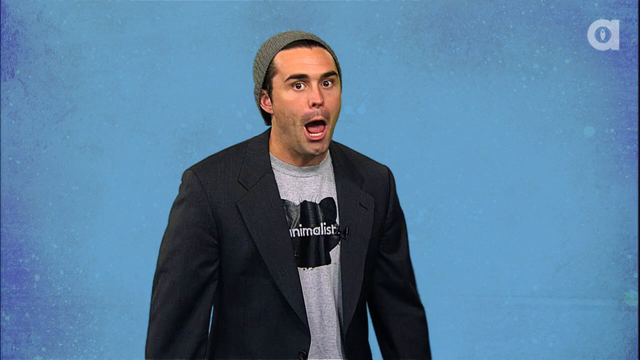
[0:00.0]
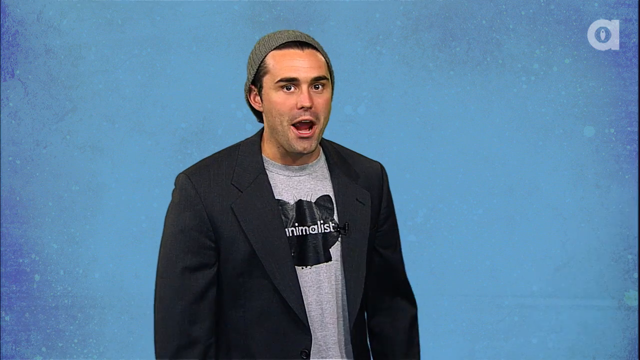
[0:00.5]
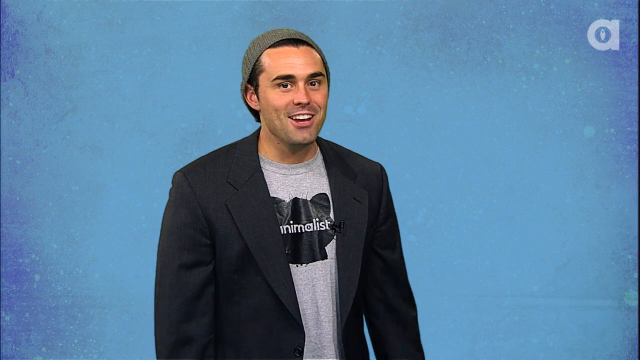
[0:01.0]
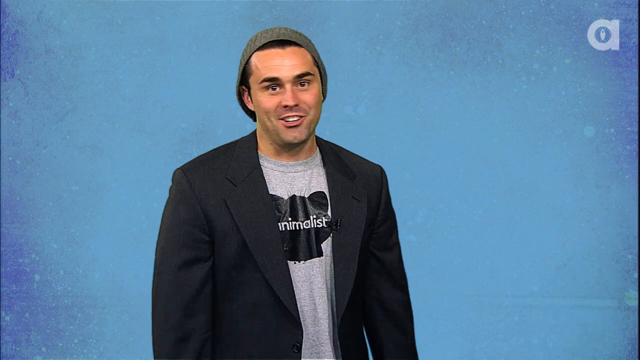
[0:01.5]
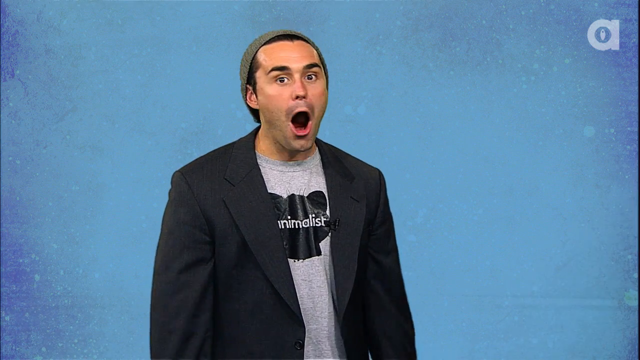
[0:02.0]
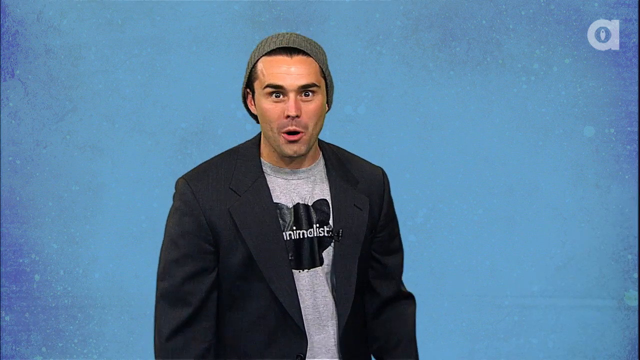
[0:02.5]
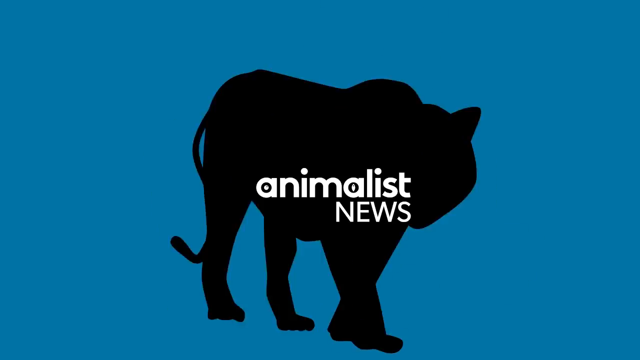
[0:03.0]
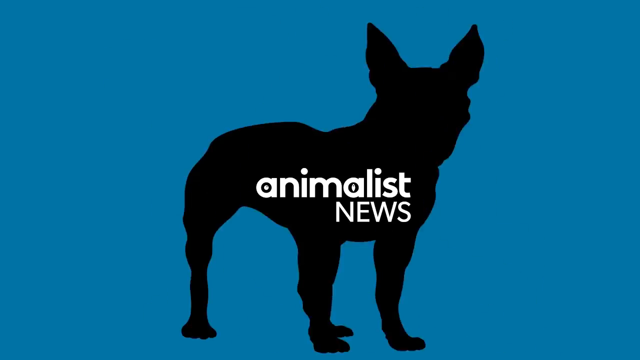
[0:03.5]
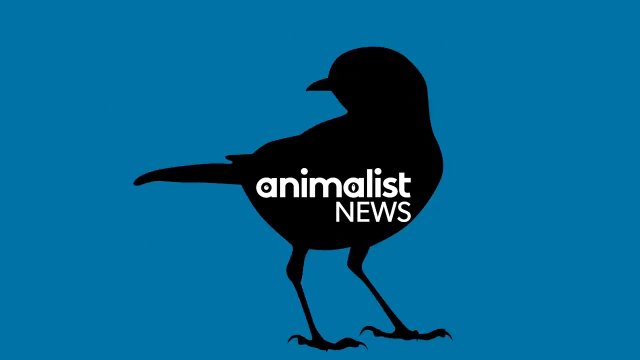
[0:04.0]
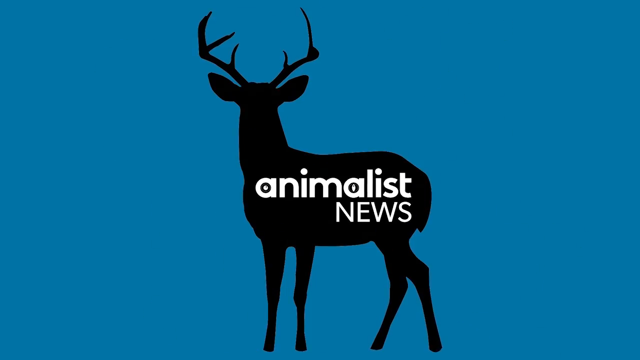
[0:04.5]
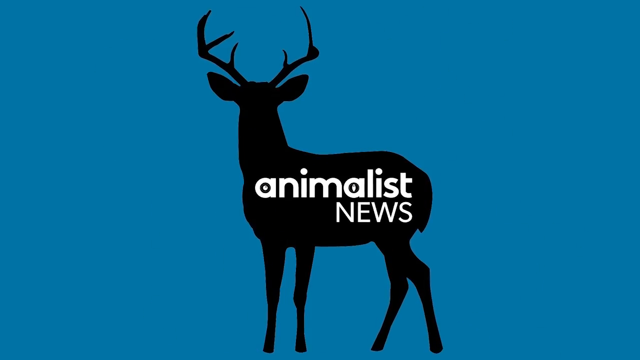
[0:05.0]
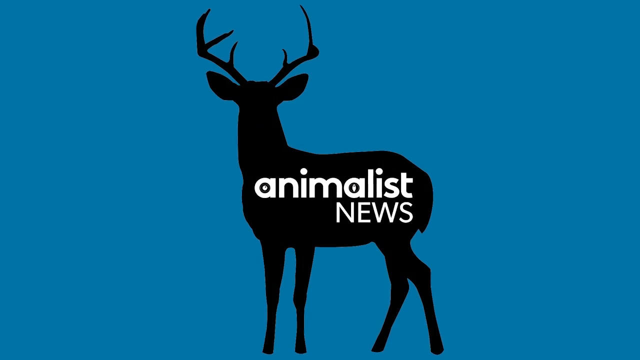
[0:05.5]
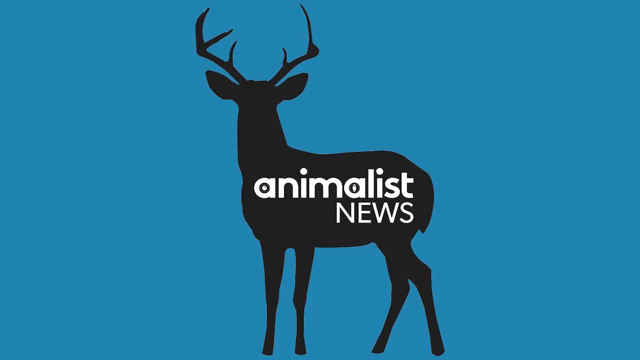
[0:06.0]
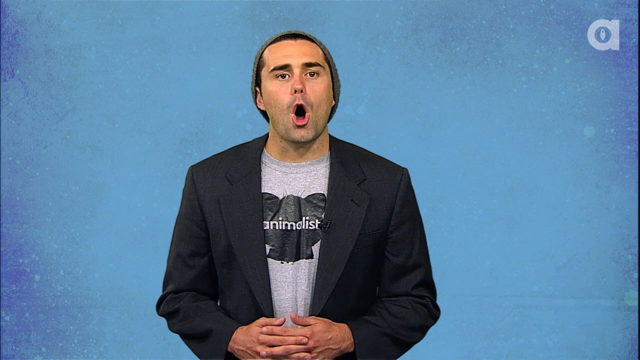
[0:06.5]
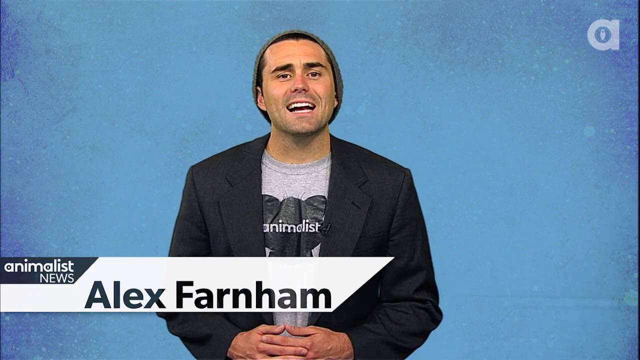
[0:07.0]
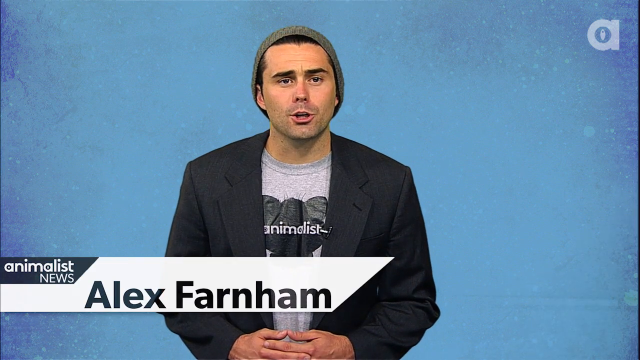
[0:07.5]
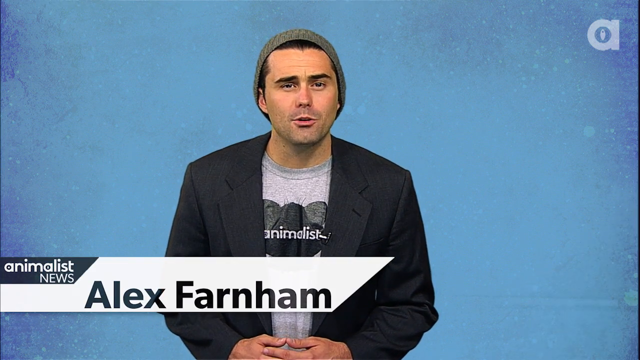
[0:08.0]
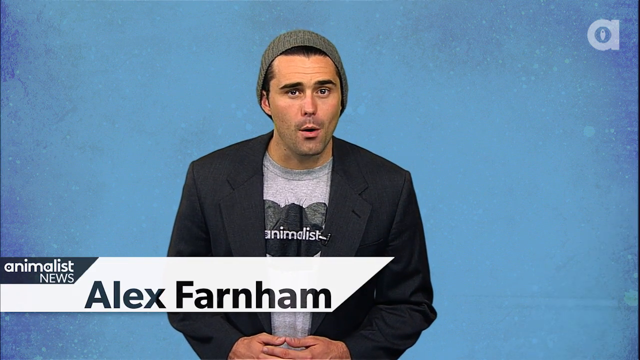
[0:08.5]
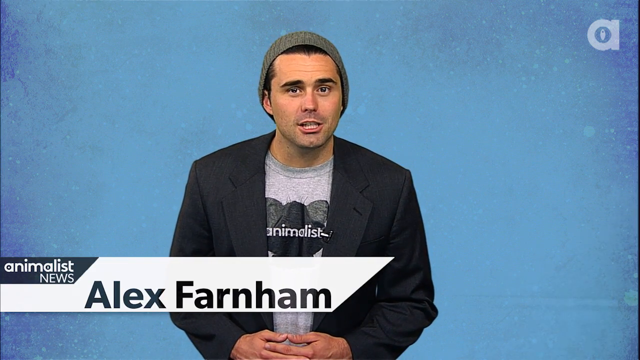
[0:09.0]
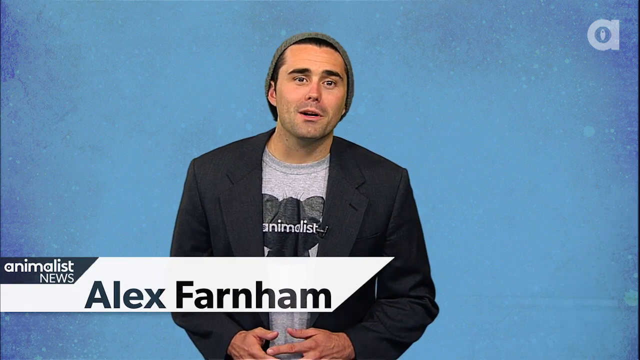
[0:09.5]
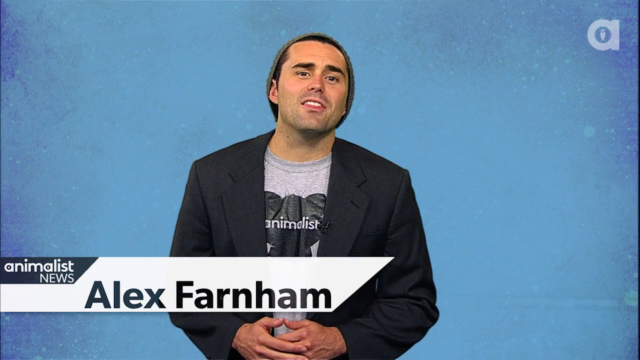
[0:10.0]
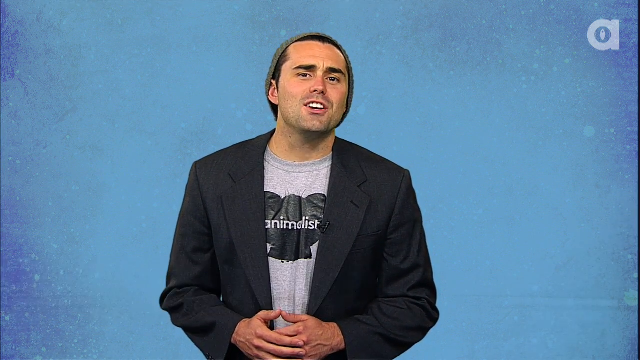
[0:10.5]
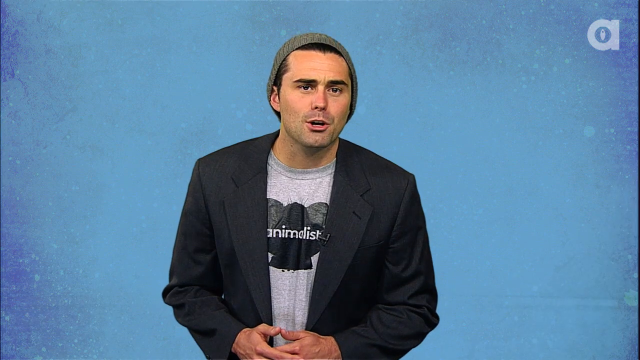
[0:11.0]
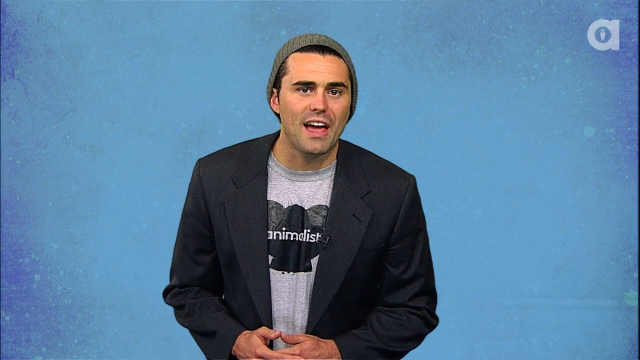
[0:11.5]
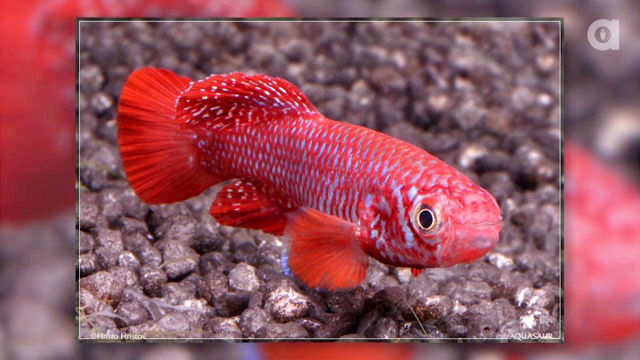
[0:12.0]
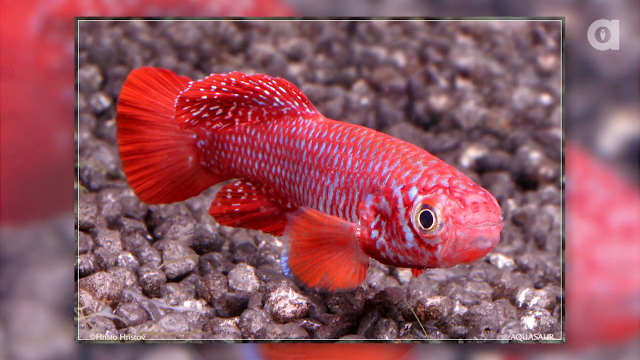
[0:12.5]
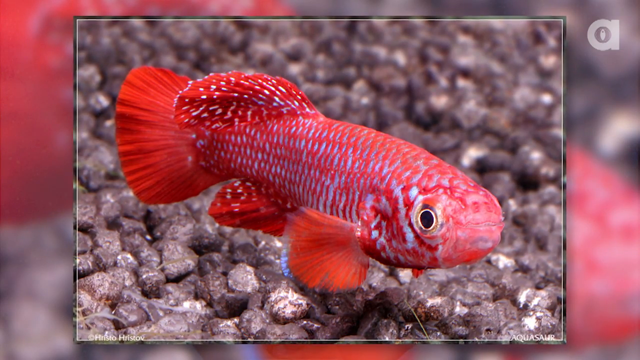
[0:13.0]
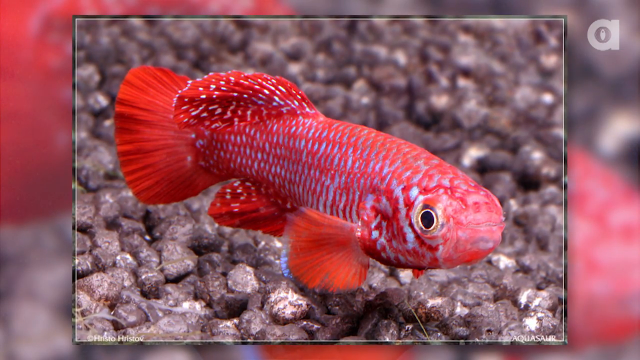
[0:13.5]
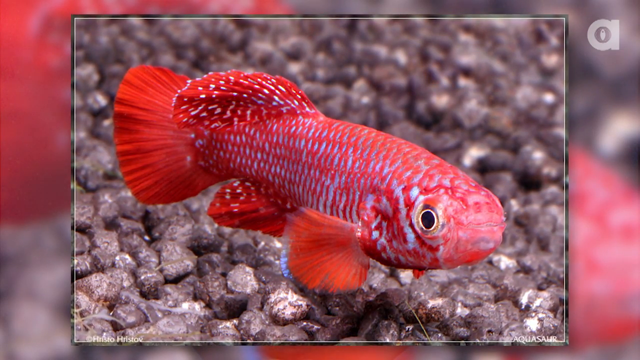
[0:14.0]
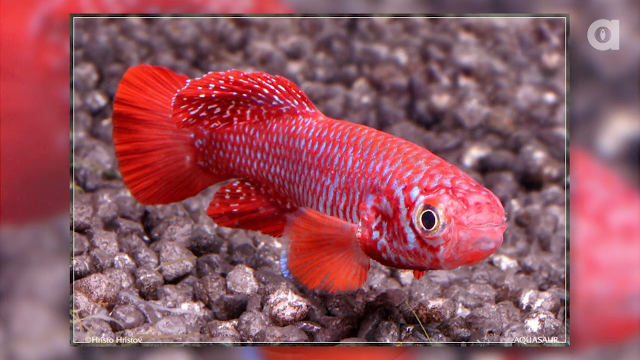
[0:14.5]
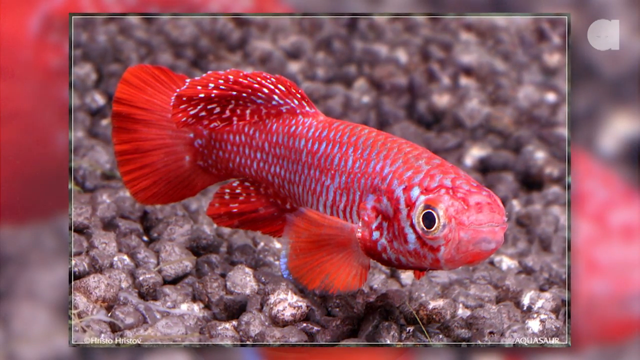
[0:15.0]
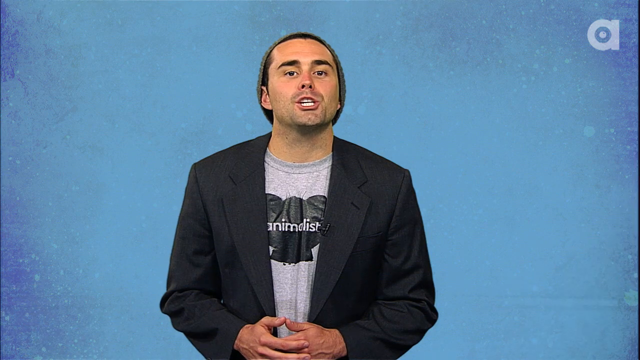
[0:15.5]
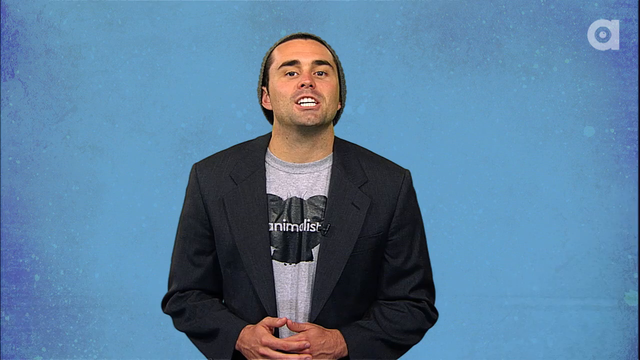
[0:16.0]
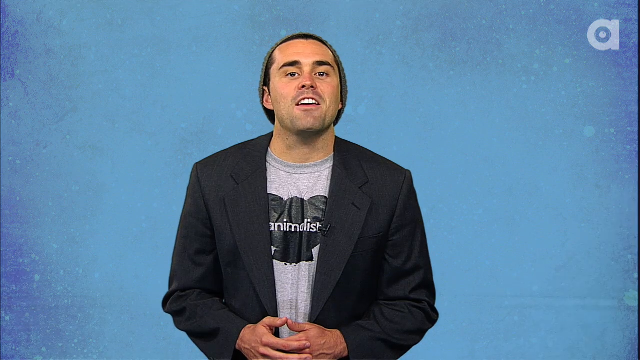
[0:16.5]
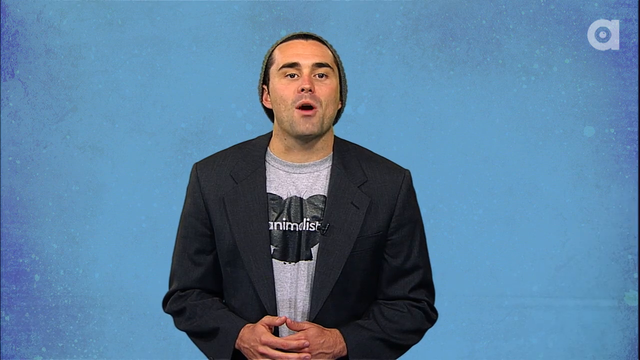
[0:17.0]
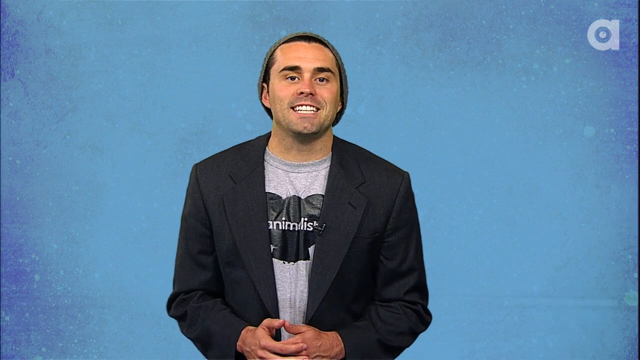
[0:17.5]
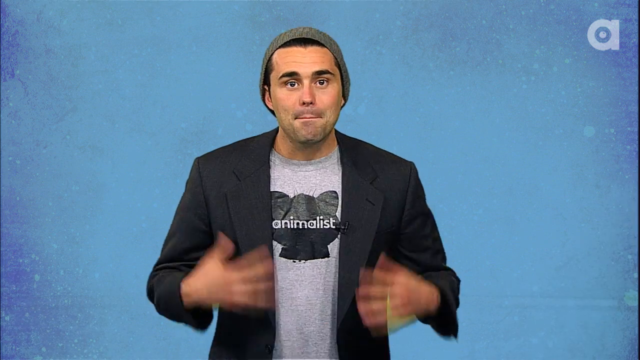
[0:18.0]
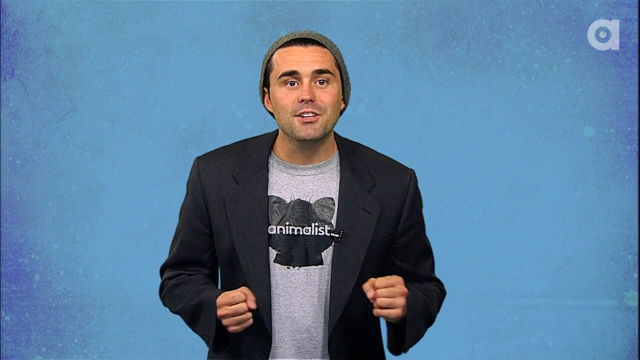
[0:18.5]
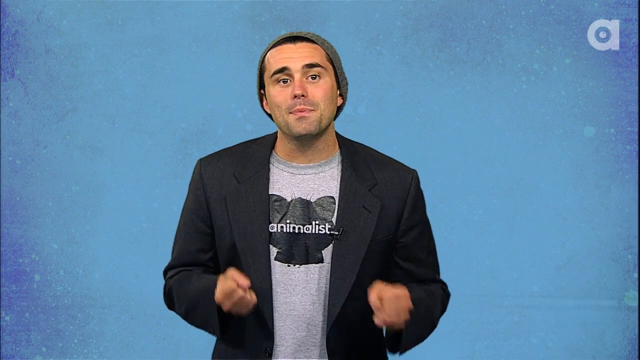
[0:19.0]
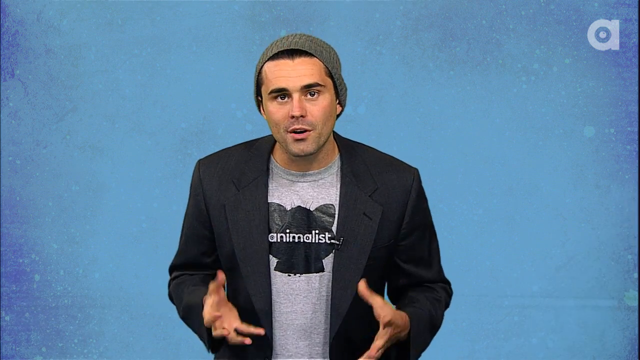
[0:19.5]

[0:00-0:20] The video is titled Is This Fish Hornier Than You? It opens with the host in front of a blue screen background. He wears a black suit jacket over a grey t-shirt, which has a black inkblot-type graphic on the front with "animalist" in lowercase font centered inside it. The host starts out very animated, screaming at the camera. It then cuts to him talking in front of the blue screen, and an image of a small red fish, about the size of a goldfish, appears. A banner pops up in the bottom left corner of the frame giving the host's name as Alex Farnham. Another graphic appears in the bottom right: a black square with a white silhouette of a deer inside it. The video cuts back to the host, who keeps talking in a very animated way, and then a graphic reading "Animalist News" appears on the screen, with black font on a blue background.